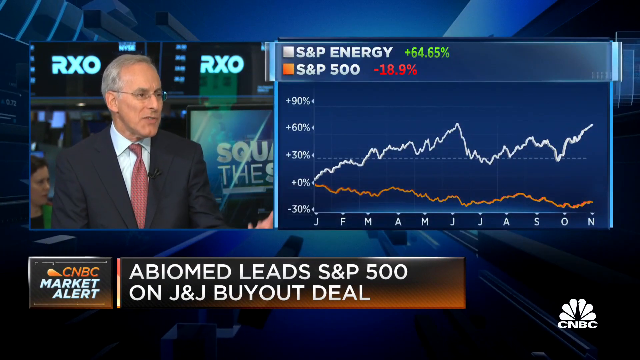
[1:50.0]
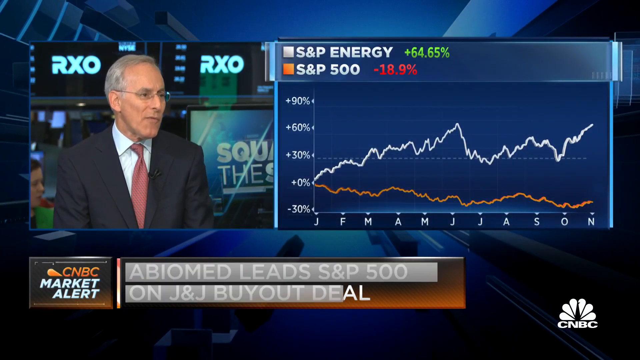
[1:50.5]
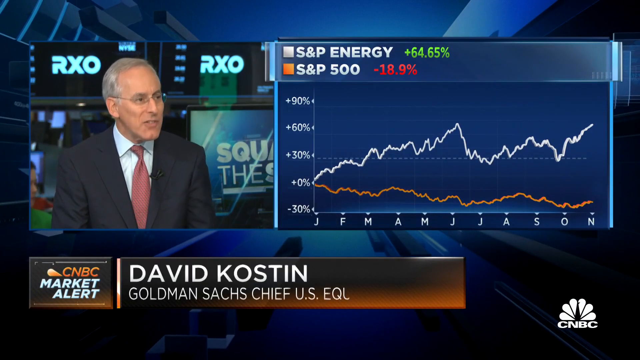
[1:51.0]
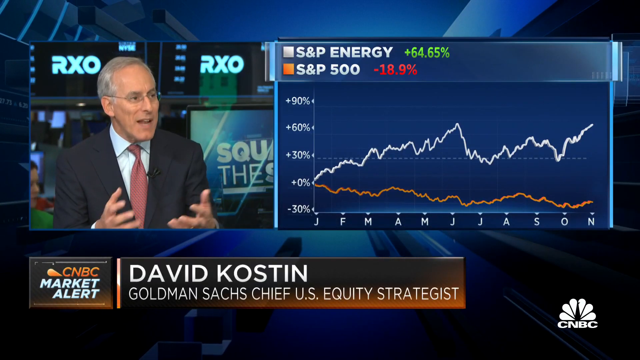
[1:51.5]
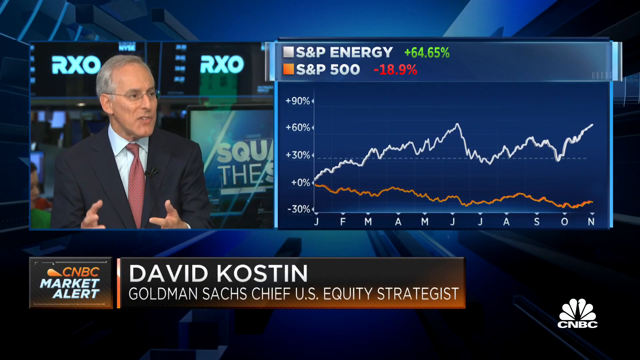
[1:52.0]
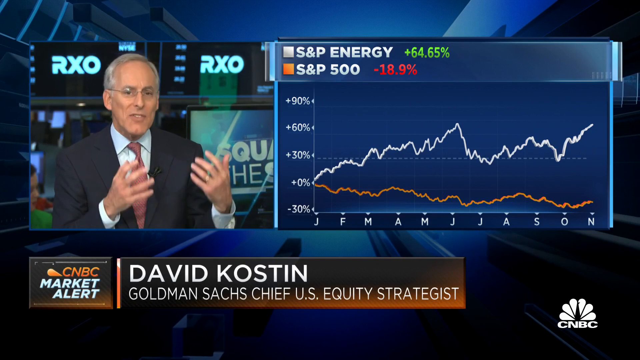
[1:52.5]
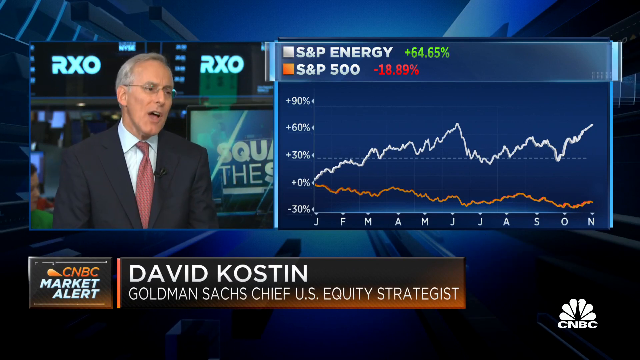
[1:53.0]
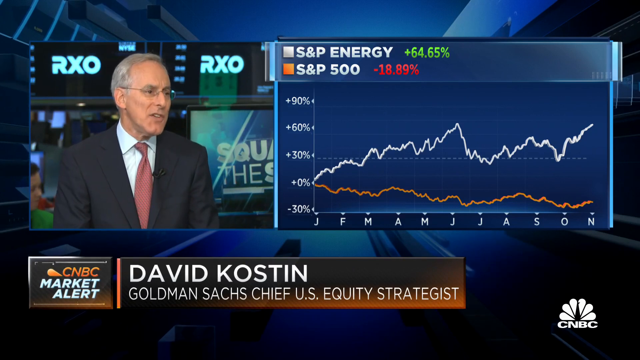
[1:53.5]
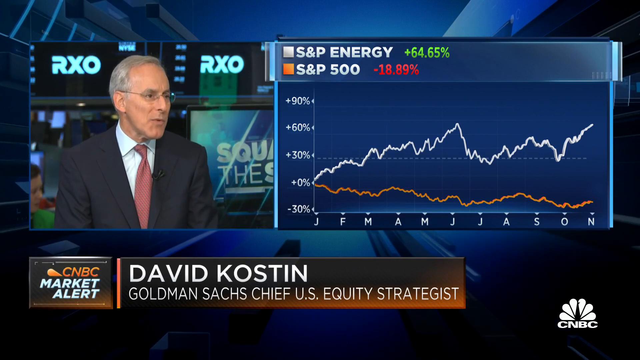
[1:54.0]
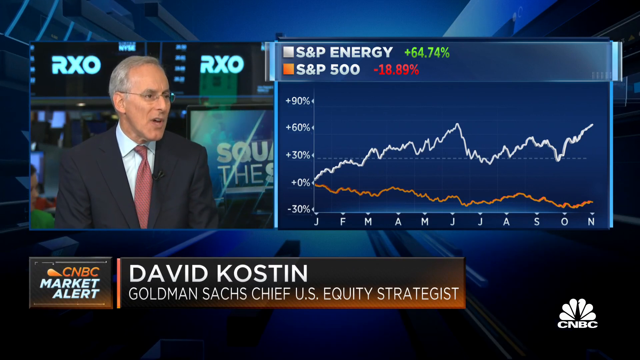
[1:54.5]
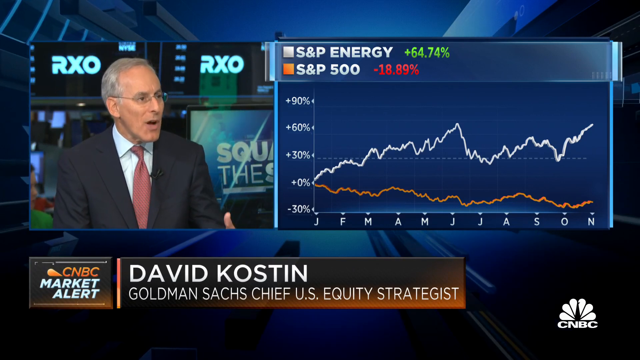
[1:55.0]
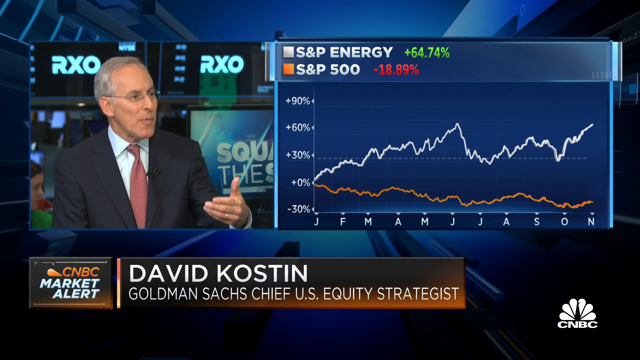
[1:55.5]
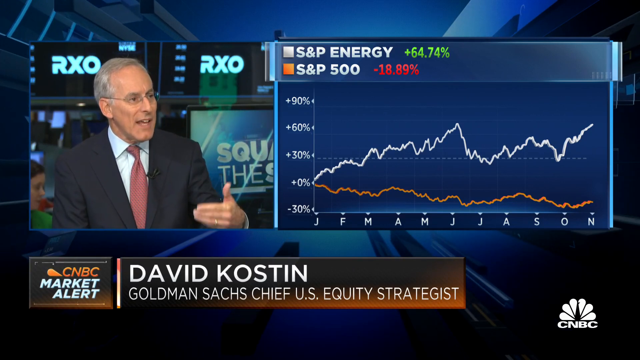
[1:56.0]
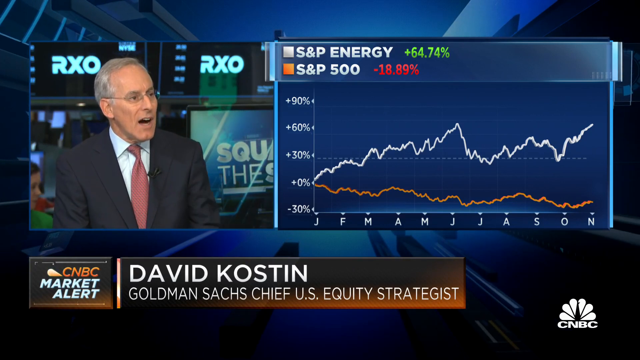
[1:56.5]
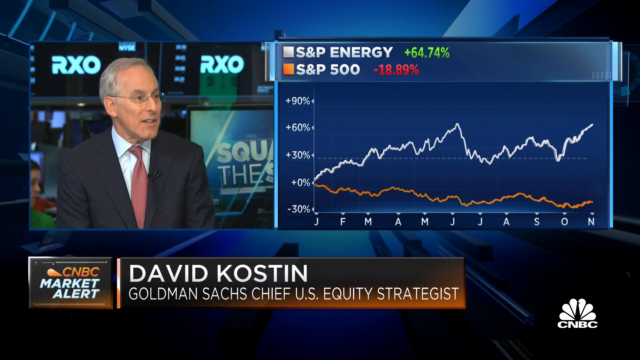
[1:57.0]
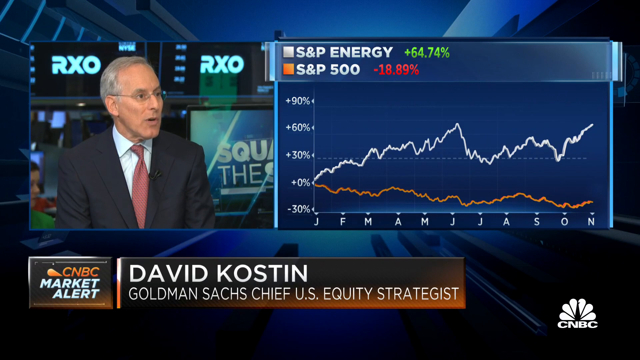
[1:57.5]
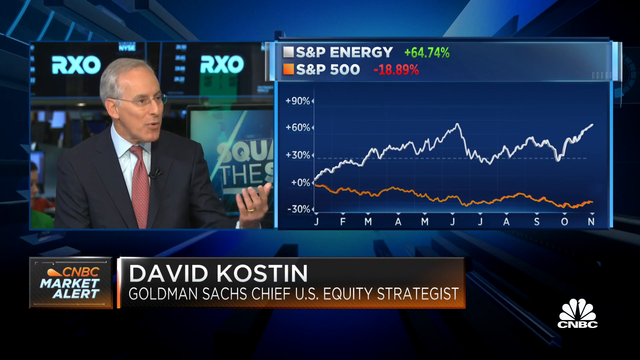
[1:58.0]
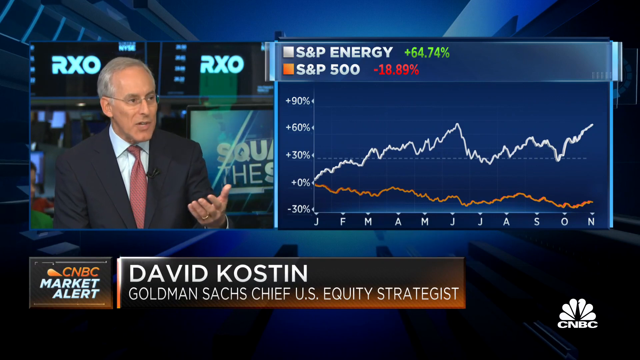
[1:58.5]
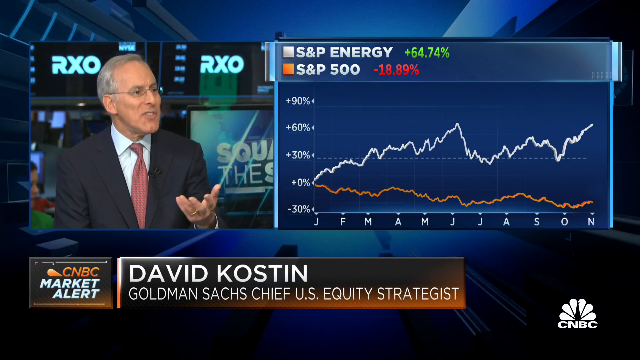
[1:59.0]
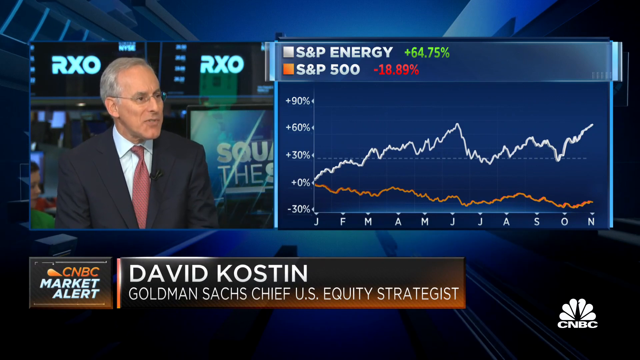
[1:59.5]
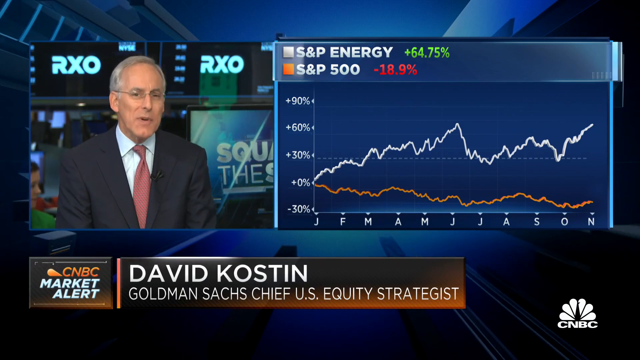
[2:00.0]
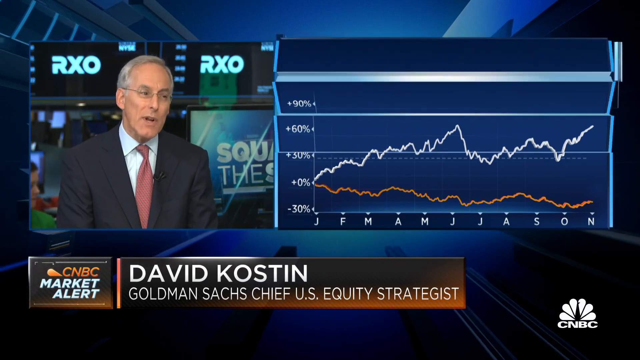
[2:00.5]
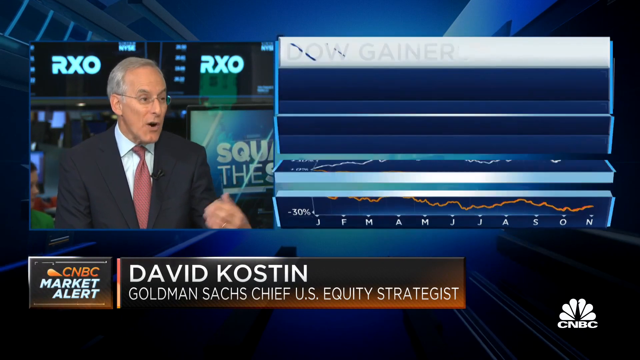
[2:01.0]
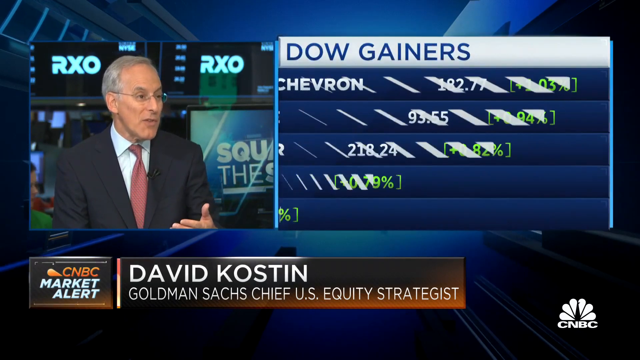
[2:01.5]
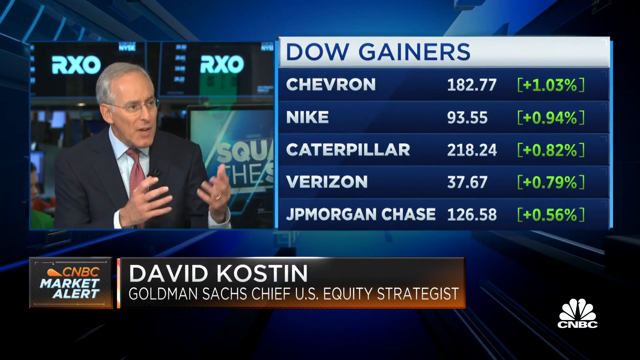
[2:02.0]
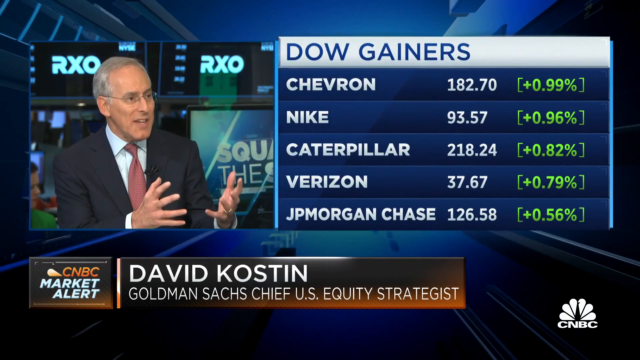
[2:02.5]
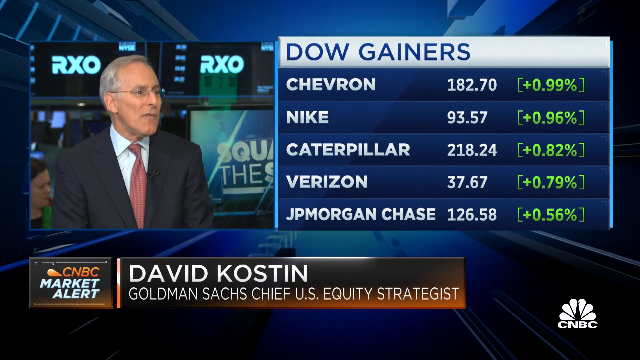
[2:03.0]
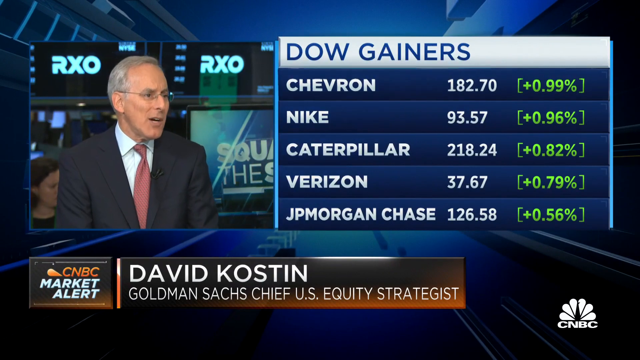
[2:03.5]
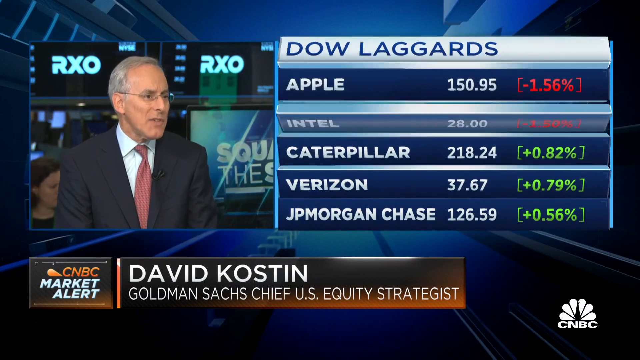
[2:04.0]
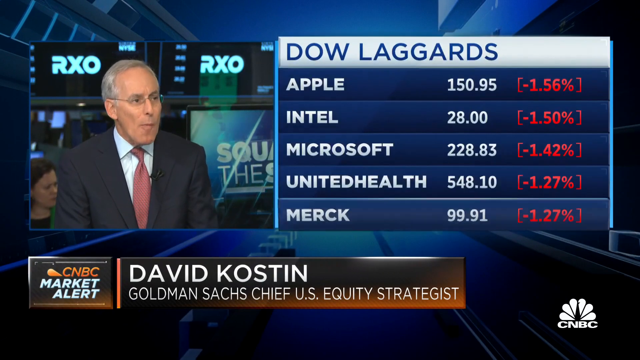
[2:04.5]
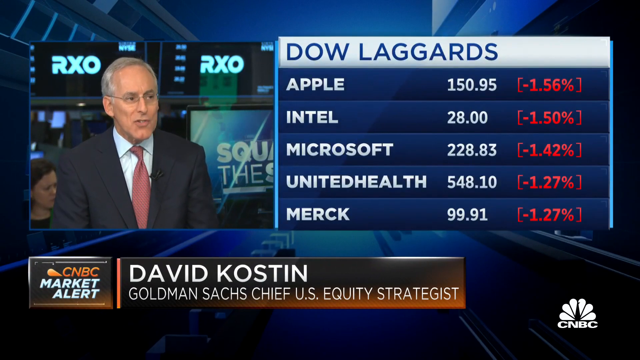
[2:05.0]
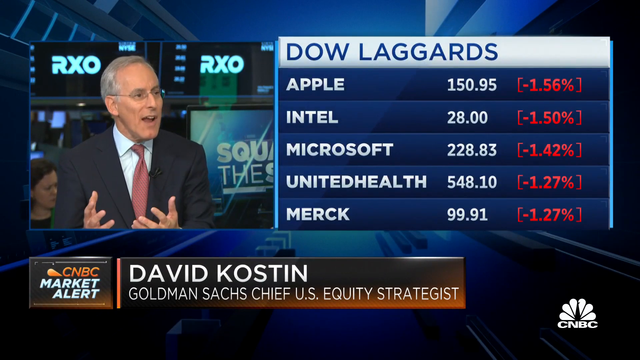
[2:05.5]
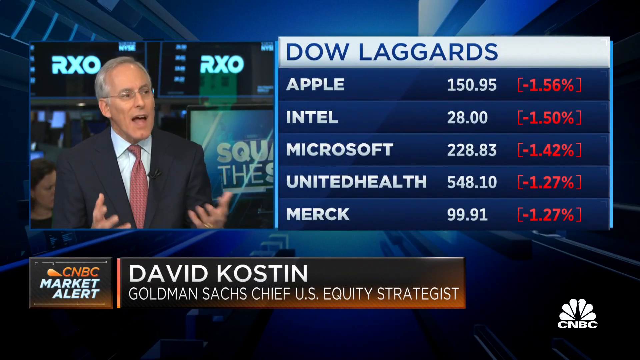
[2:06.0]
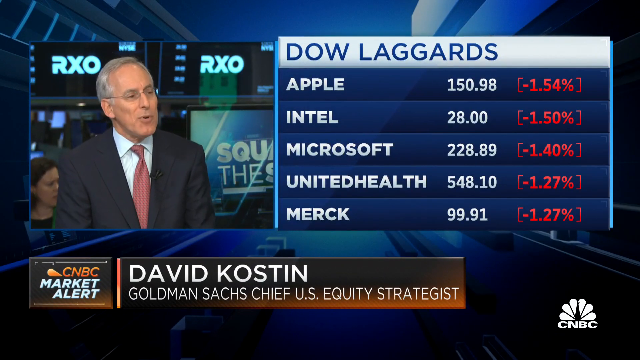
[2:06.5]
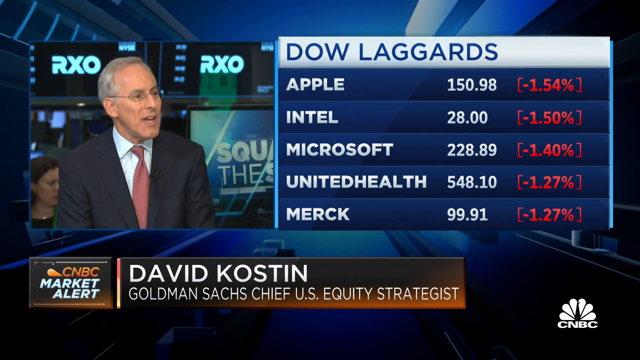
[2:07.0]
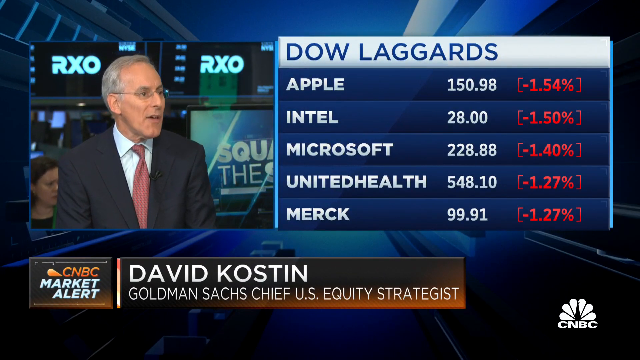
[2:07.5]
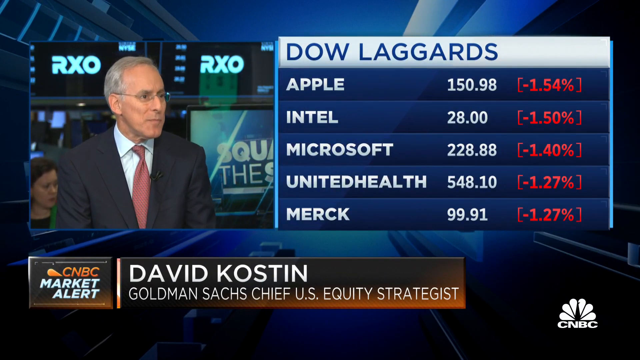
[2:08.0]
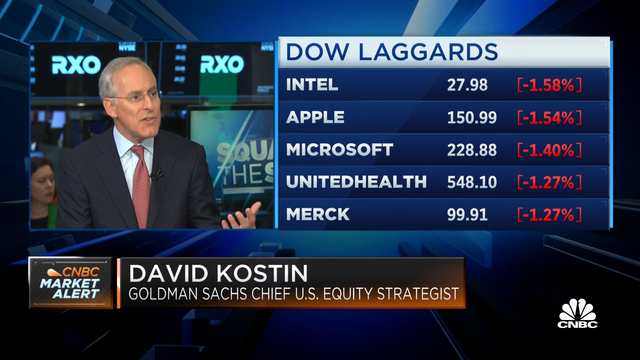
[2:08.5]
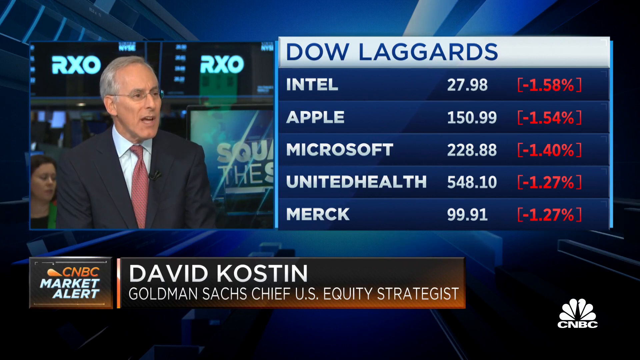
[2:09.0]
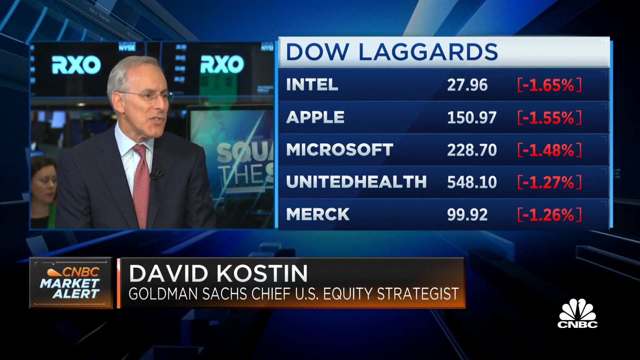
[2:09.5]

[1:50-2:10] Graphs compare S&P Energy, up almost 65%, with the S&P 500, down almost 19%. David Koston, Goldman Sachs chief U.S. equity strategist, is still talking as the main speaker. A Dow Gainers list shows Chevron up almost 1%, Nike just over 1%, Caterpillar 0.82, Verizon 0.79 and JP Morgan Chase 0.56. A Dow Laggards list shows Apple down 1.56%, Intel down 1.5, Microsoft down 1.42, United Health down 1.27 and Merck down 1.27.